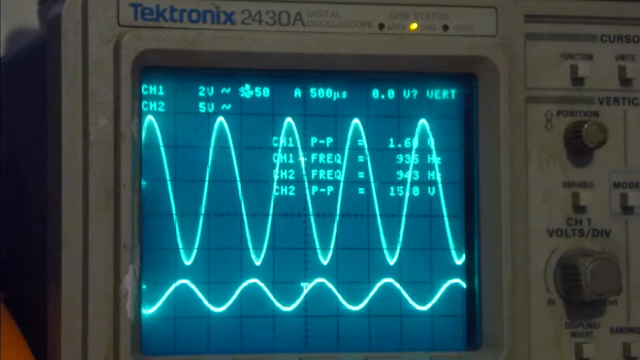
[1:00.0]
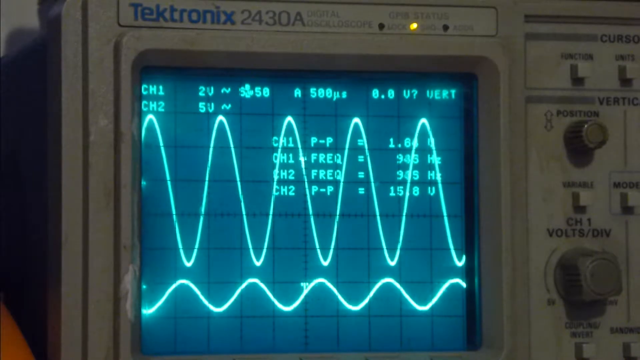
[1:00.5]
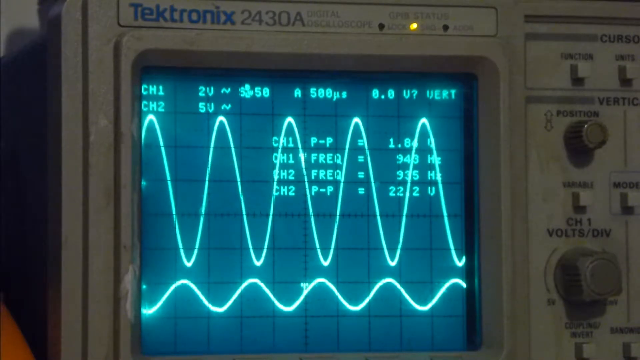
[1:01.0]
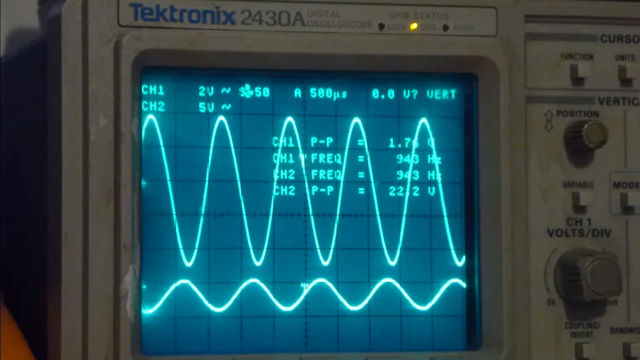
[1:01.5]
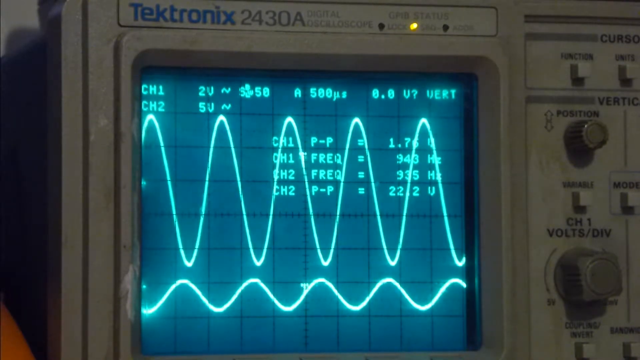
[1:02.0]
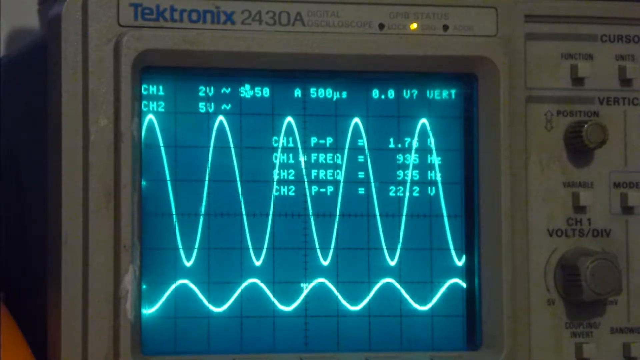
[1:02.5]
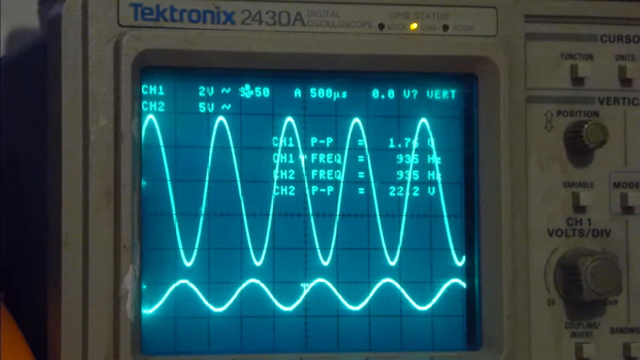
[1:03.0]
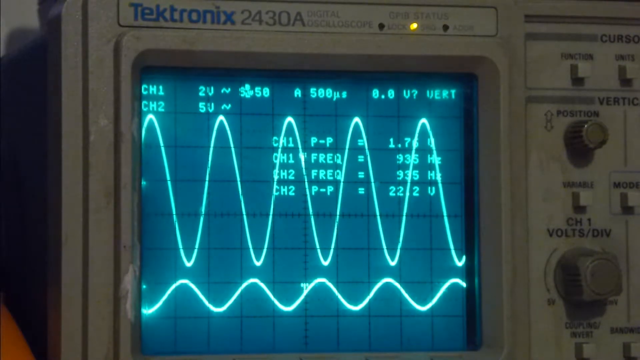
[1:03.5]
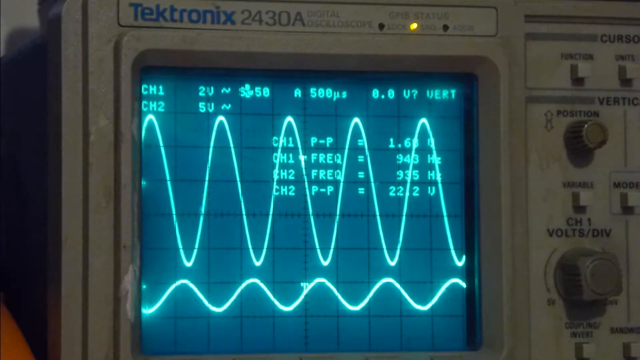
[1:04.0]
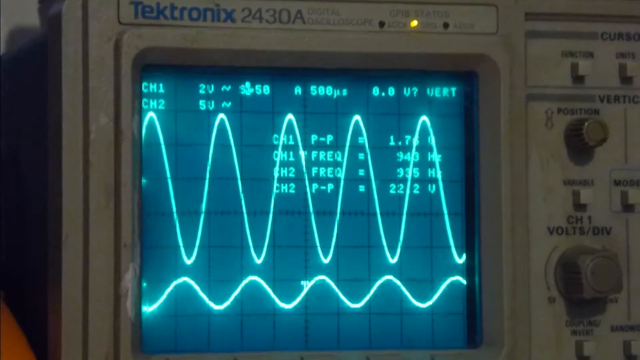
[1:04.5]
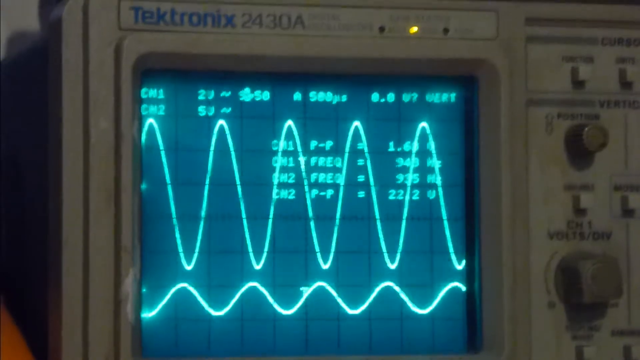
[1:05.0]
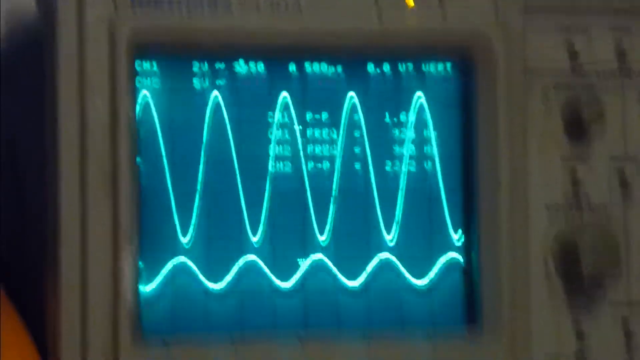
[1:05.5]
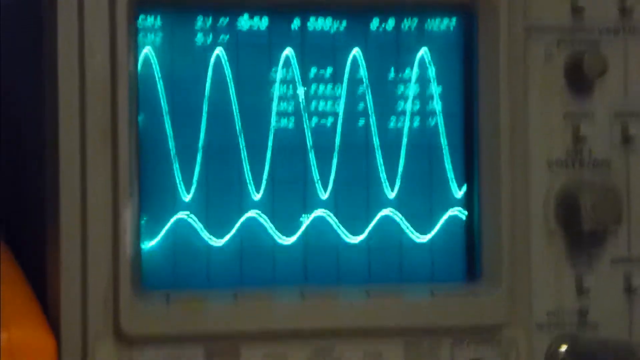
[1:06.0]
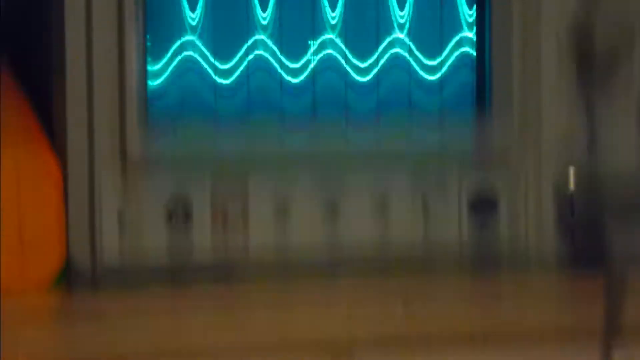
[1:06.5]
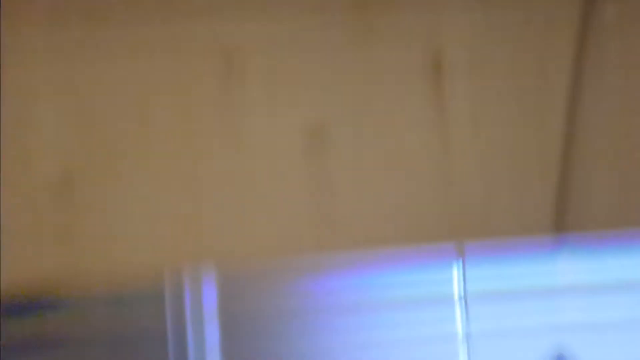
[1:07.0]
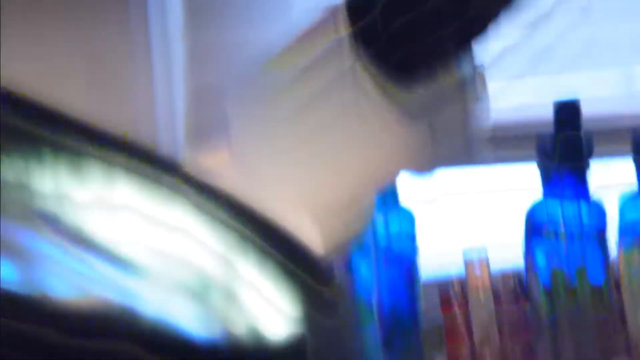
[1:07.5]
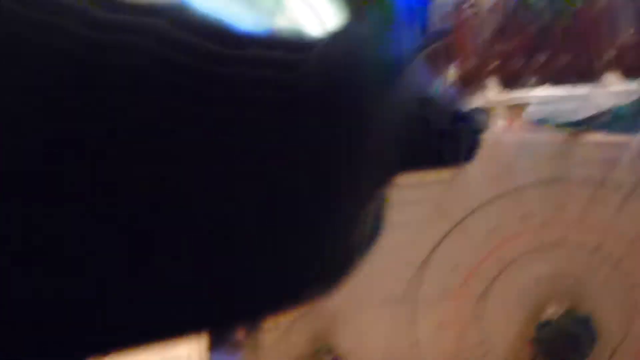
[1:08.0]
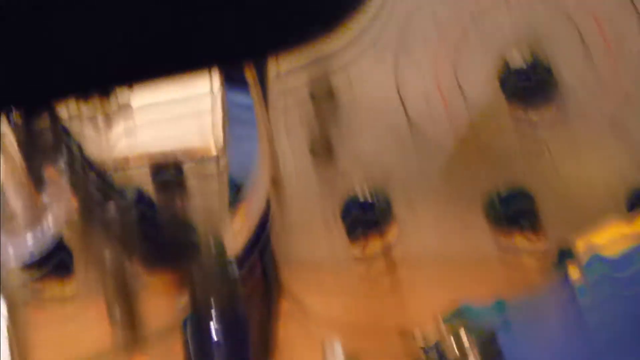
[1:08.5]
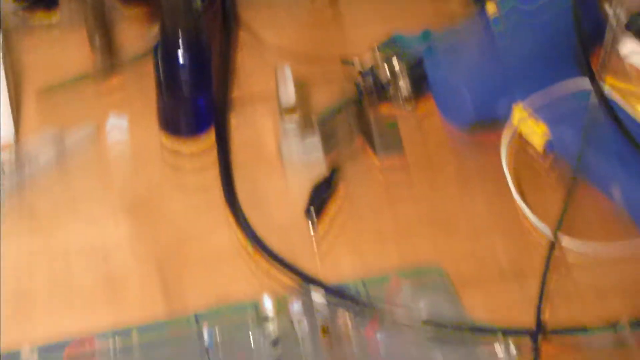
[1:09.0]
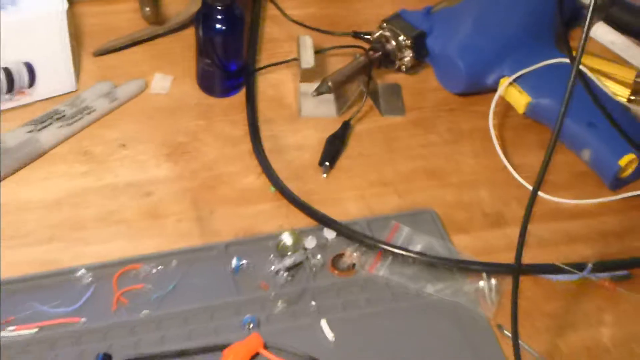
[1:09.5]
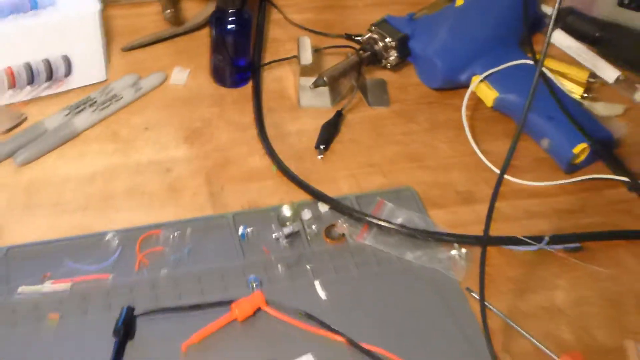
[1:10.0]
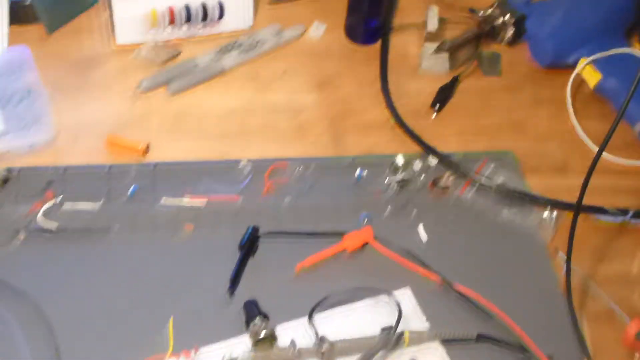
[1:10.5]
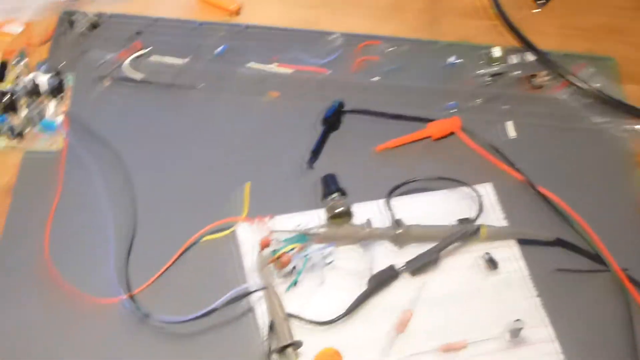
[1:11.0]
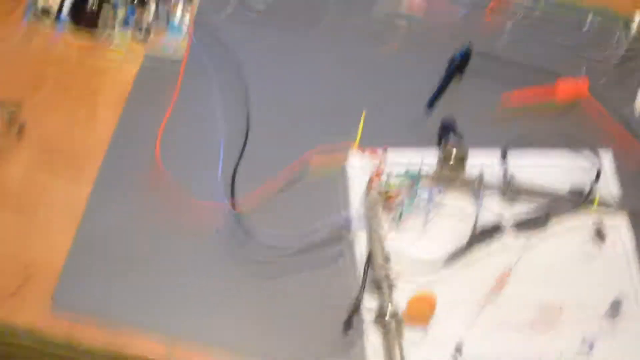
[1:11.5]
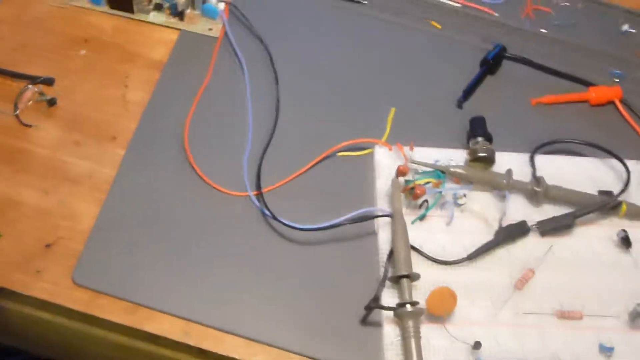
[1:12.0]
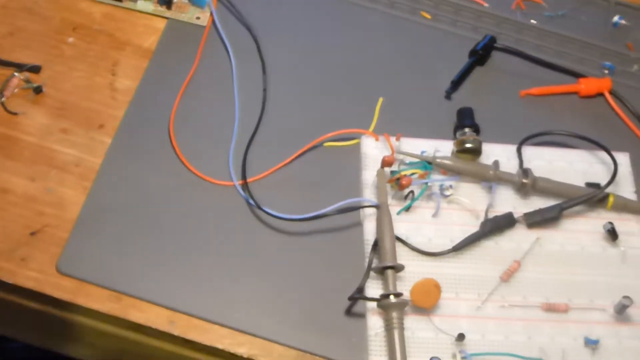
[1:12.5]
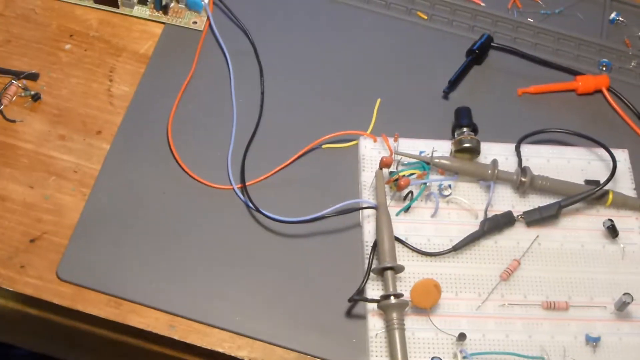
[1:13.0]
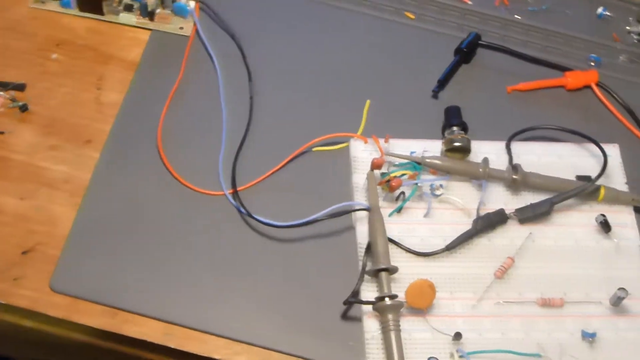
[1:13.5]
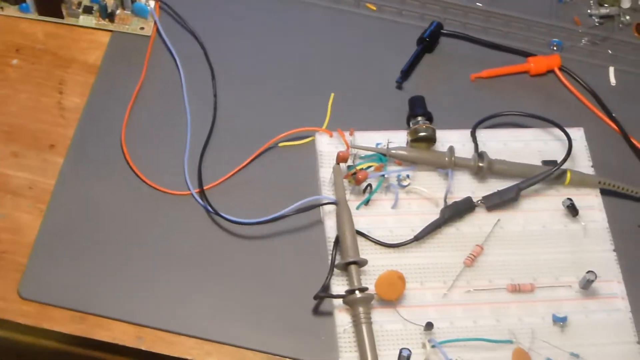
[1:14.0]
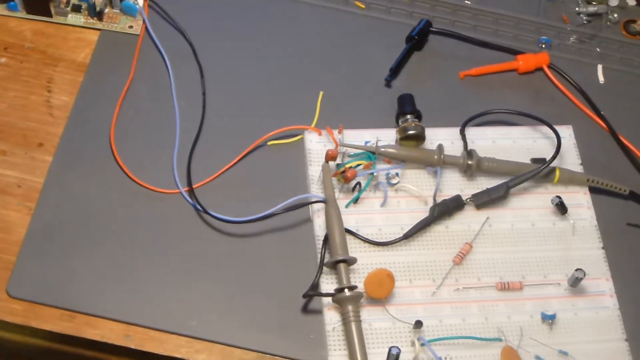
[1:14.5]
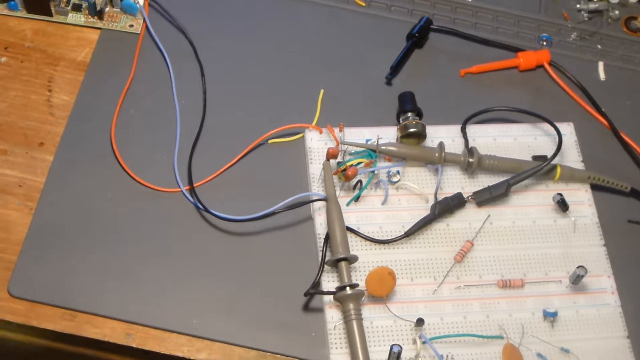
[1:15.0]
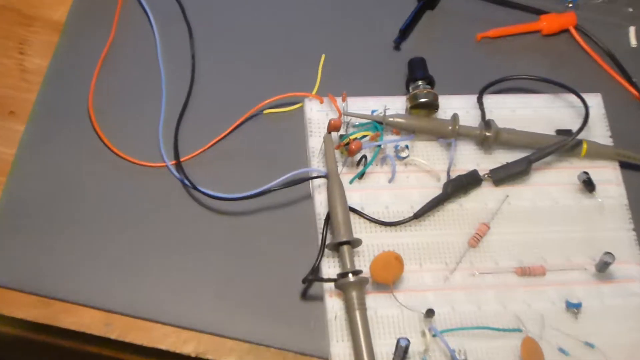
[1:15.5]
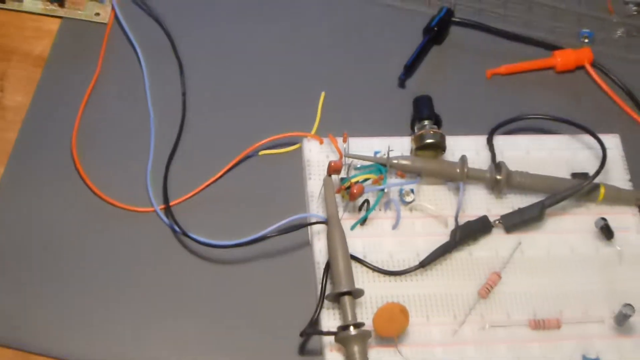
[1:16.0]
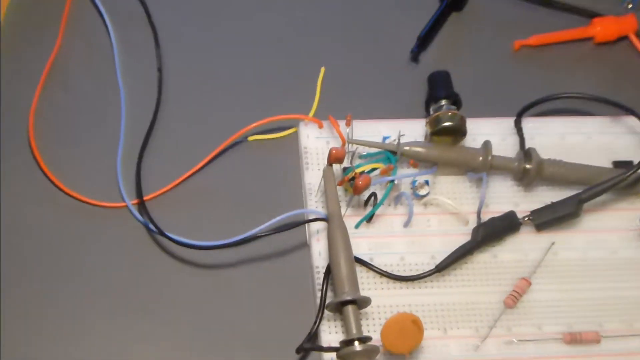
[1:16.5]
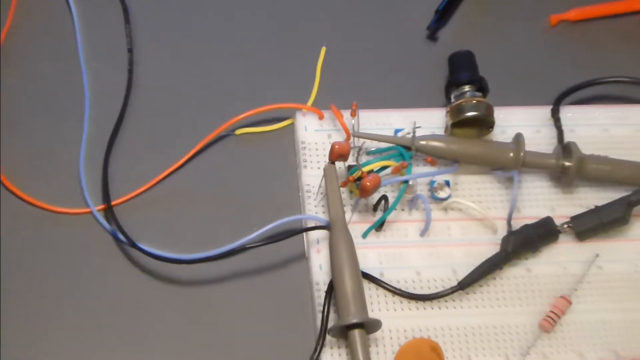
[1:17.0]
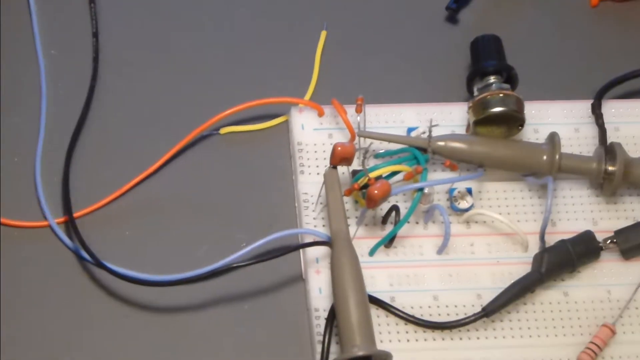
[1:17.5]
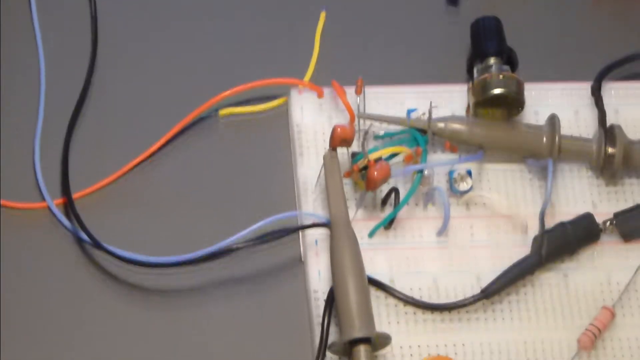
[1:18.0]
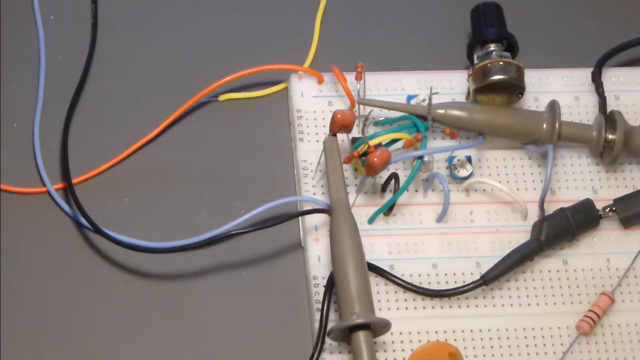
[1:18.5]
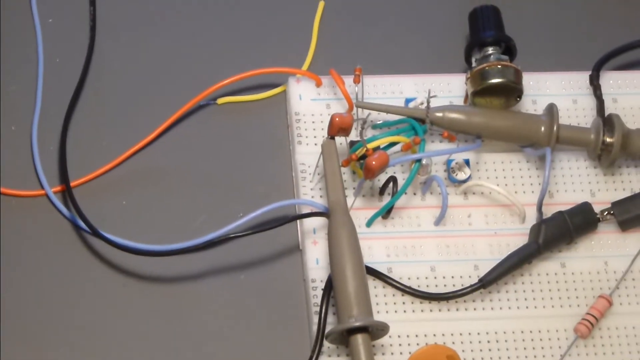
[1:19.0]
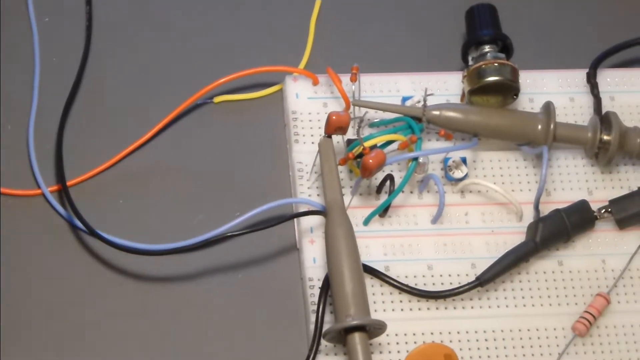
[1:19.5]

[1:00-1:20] The oscilloscope screen is shown for a while, then the camera pans down to the desk, showing two gray leads, possibly from the oscilloscope. They are hooked up to what looks like maybe capacitors or some similar electronic component: an orange capacitor with a number of other things attached to it, seemingly attached to a board. The picture is kind of messy, but a few electronic components can be seen attached to a board, probably a board tester.